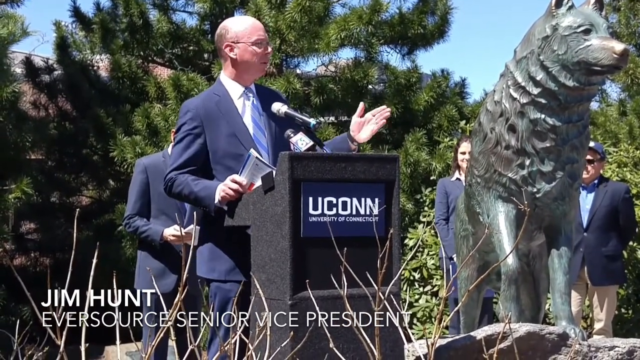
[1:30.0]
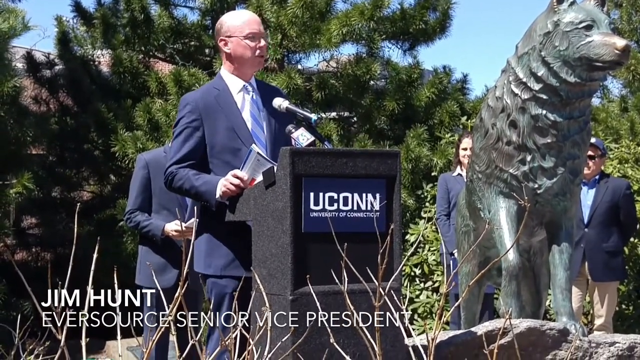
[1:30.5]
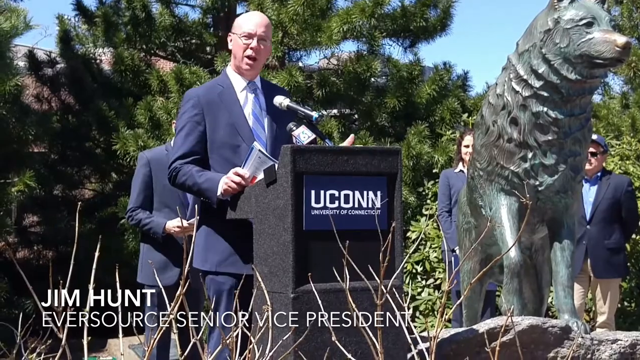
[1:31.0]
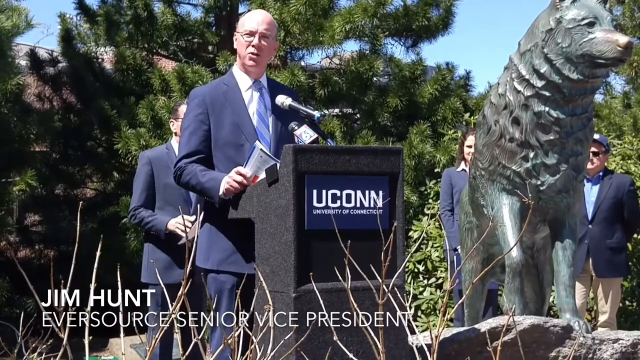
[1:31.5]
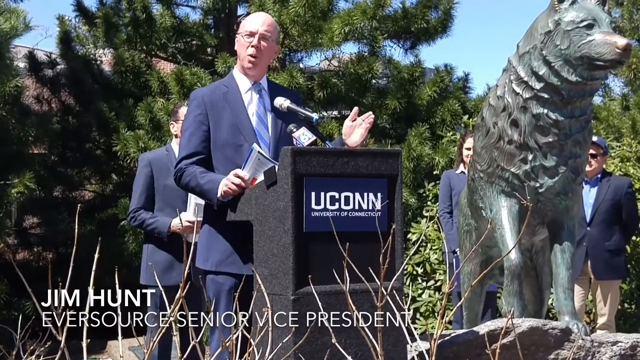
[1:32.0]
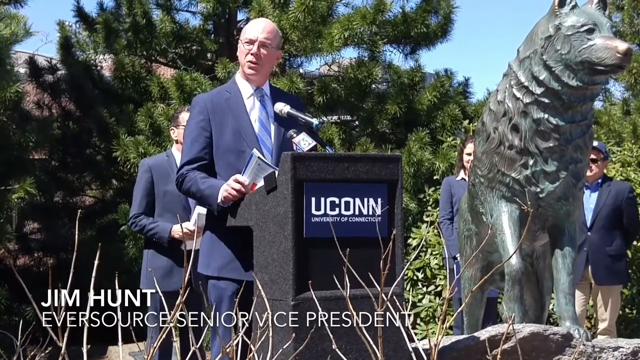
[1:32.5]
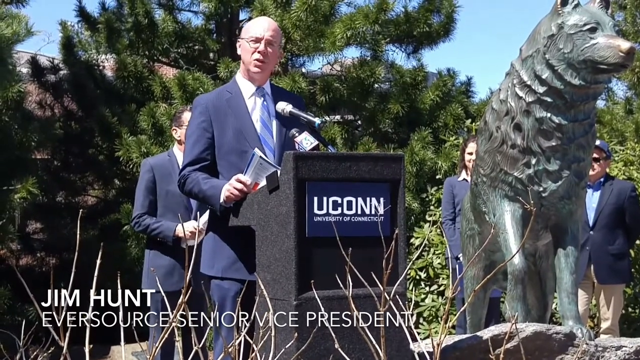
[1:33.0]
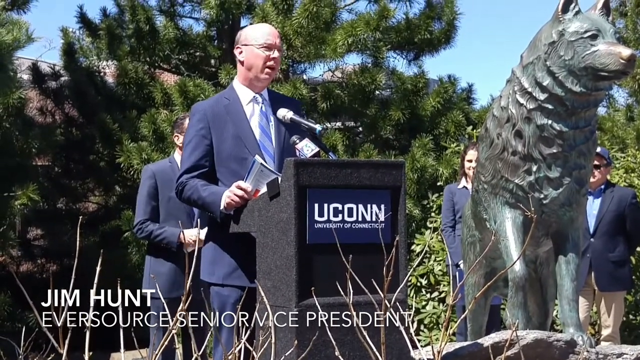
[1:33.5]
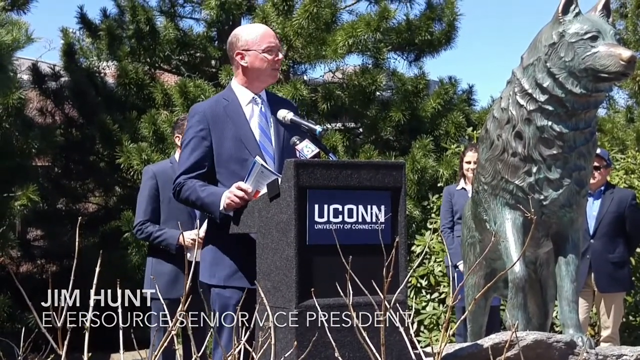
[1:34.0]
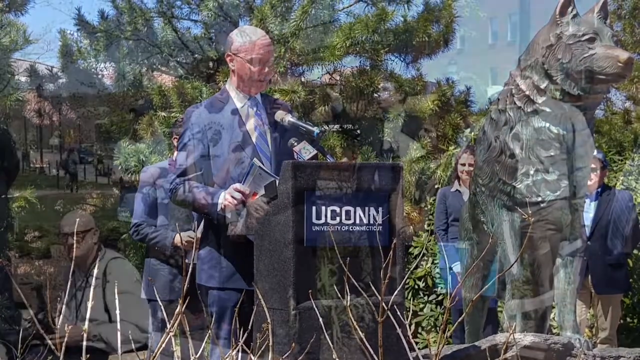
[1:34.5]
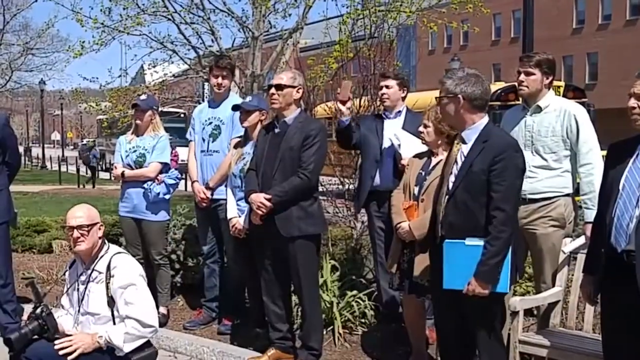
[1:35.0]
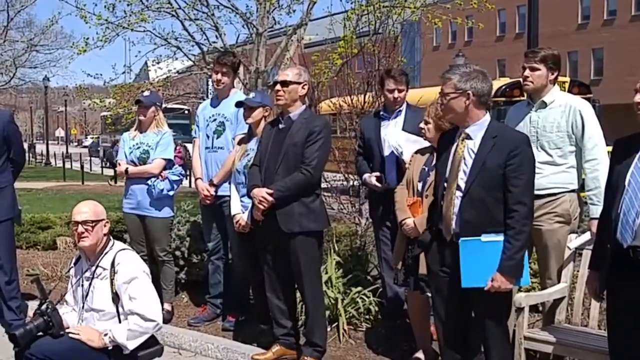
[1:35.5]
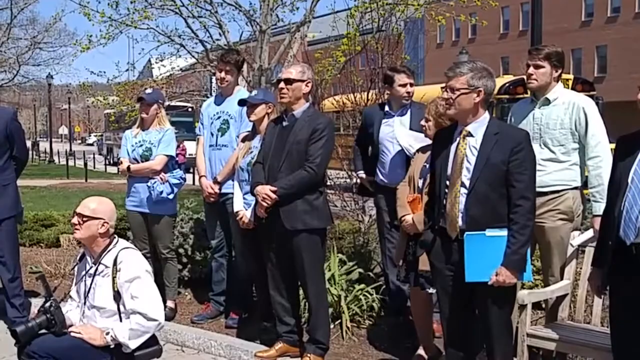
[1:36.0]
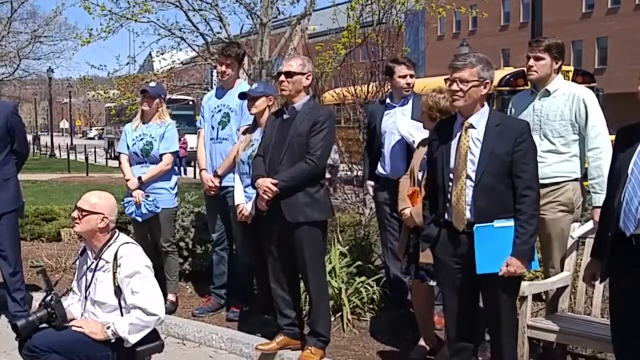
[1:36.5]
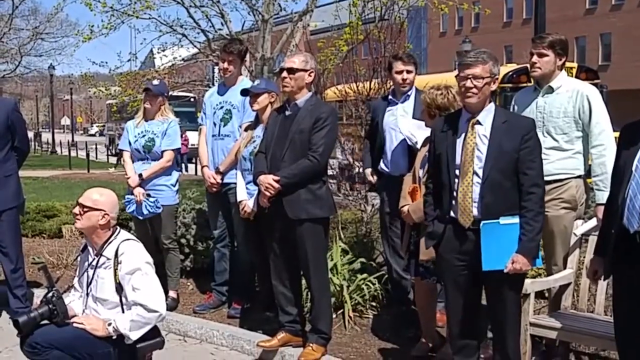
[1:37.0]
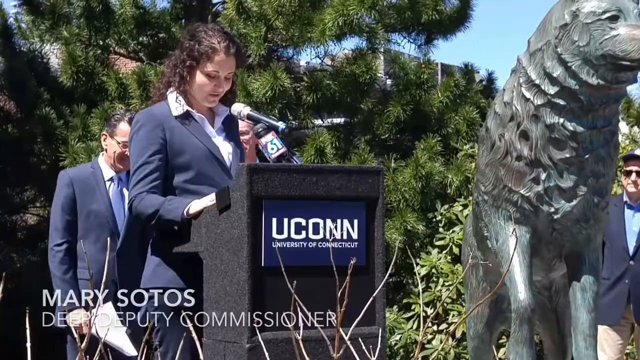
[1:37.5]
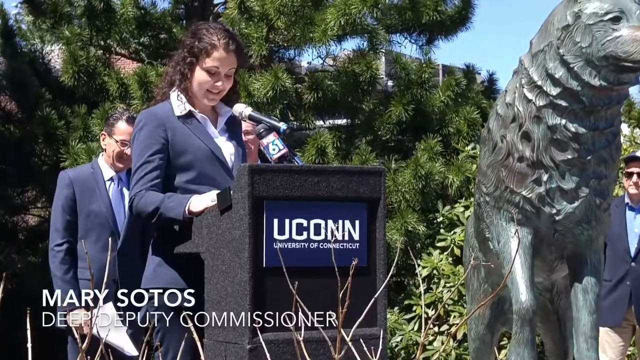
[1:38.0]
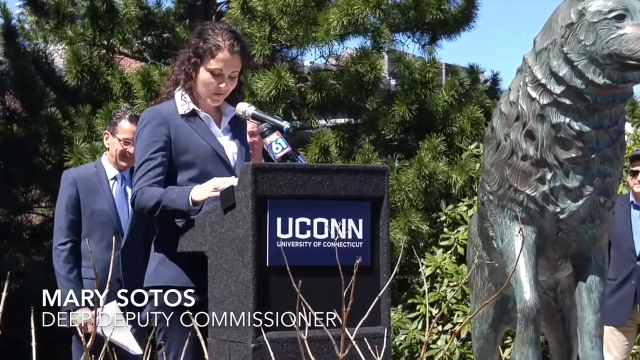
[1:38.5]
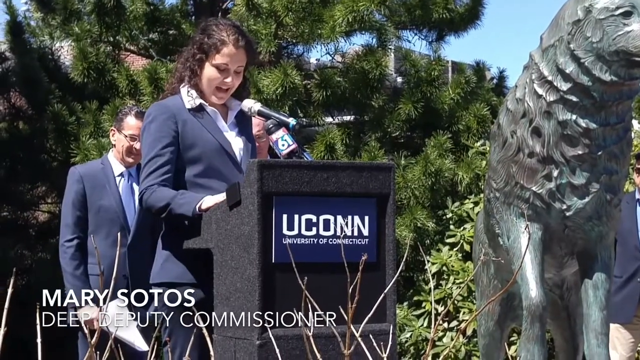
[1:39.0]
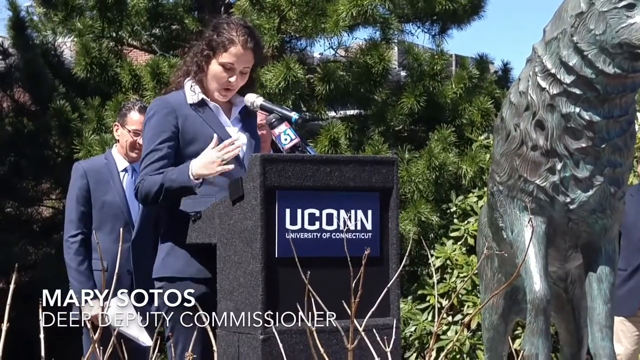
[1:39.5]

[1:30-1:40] Jim Hunt, Eversource Senior Vice President, continues delivering a speech at the University of Connecticut while volunteers listen; the audience is a small group of only about a dozen people, and there are very few Earth Day volunteers. The campus looks nice. A new speaker, Mary Sotos, deputy commissioner, then talks. Among the crowd, of the people wearing suits, only two wear ties and the other two do not; others appear to be students and maybe professors. Behind the small crowd there is a school bus in the background and another bus of some sort, on the campus. It is early spring.